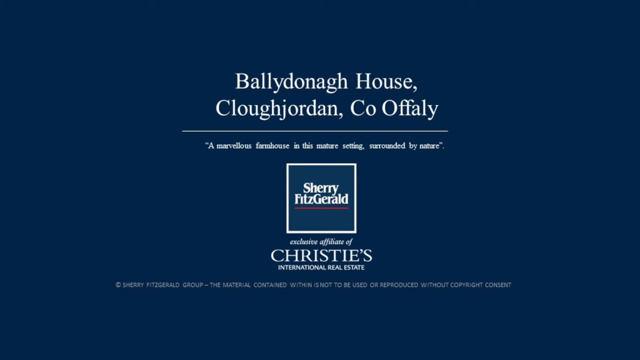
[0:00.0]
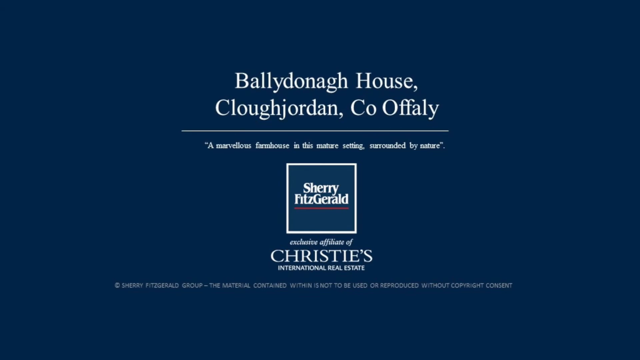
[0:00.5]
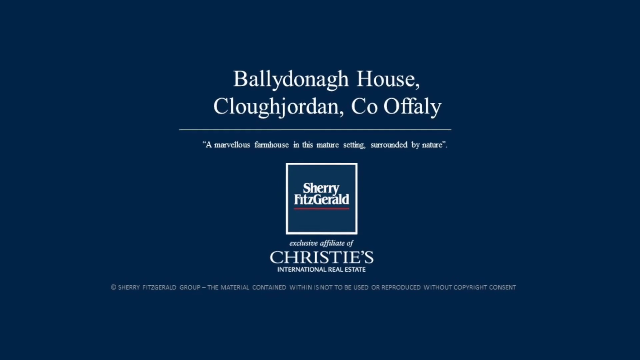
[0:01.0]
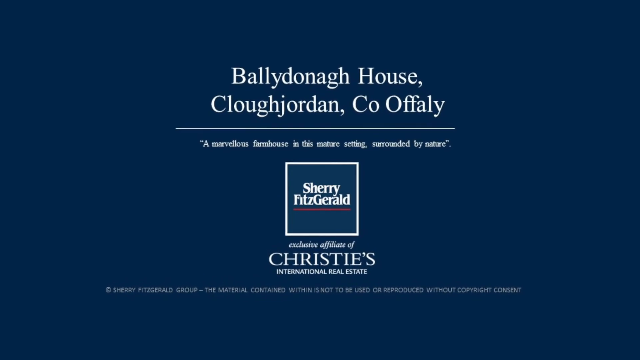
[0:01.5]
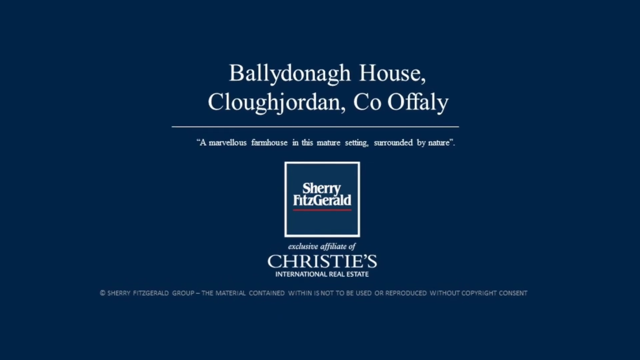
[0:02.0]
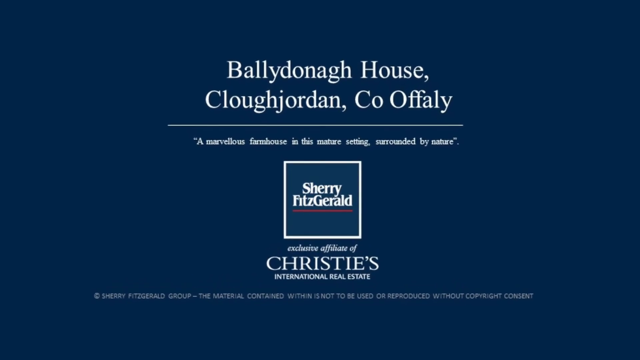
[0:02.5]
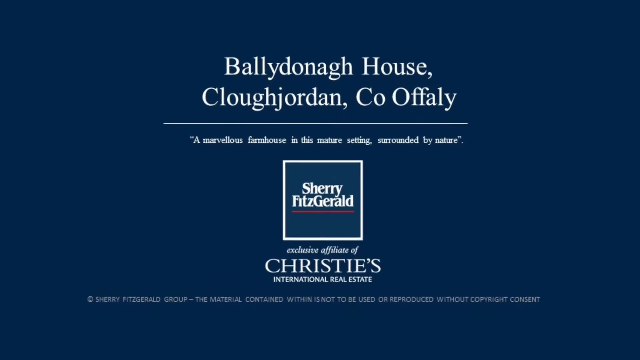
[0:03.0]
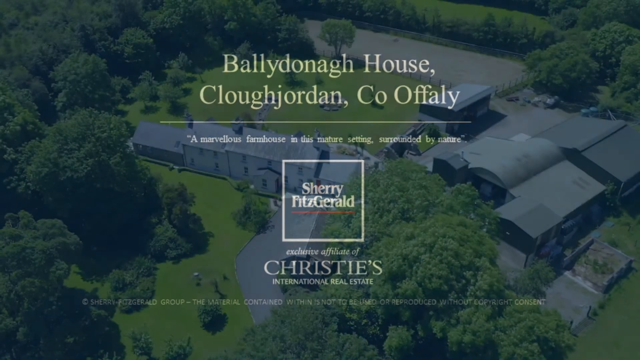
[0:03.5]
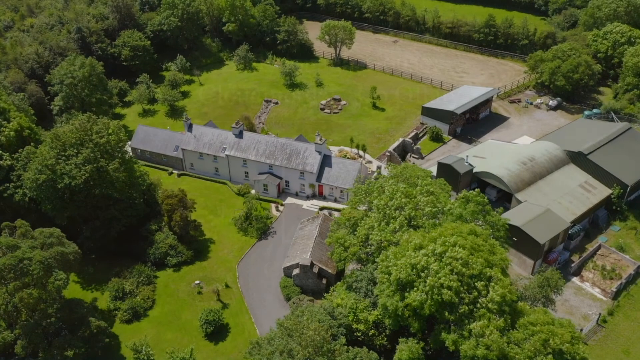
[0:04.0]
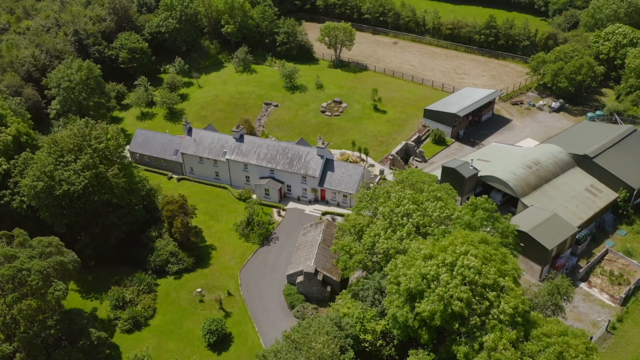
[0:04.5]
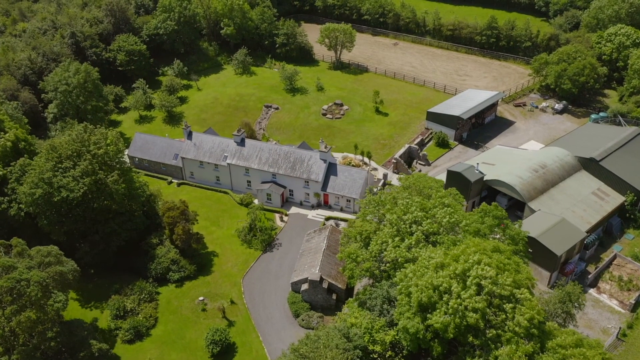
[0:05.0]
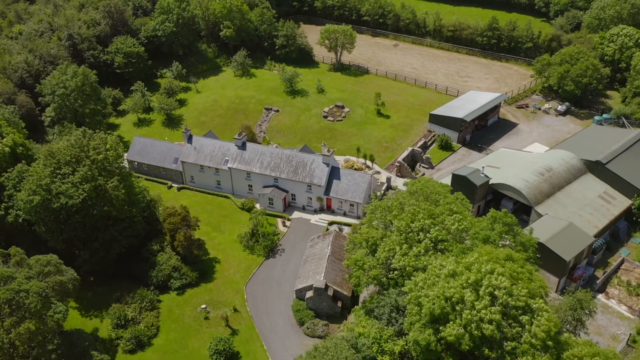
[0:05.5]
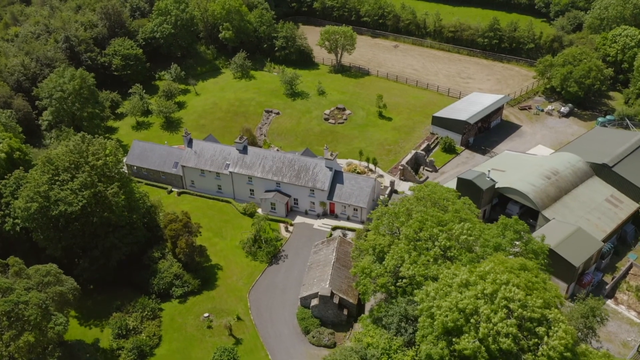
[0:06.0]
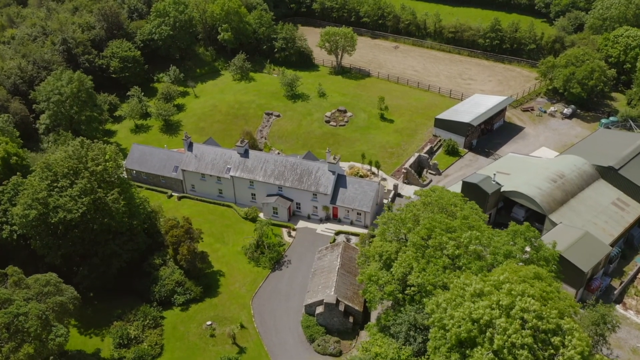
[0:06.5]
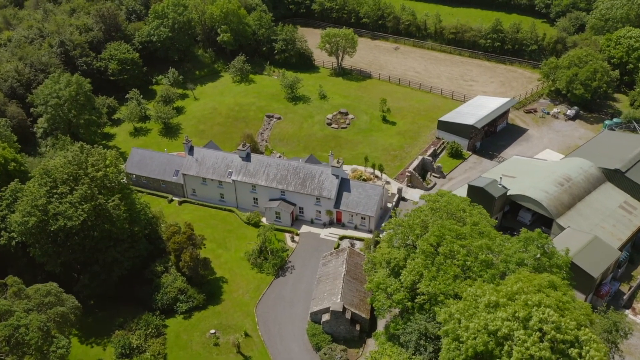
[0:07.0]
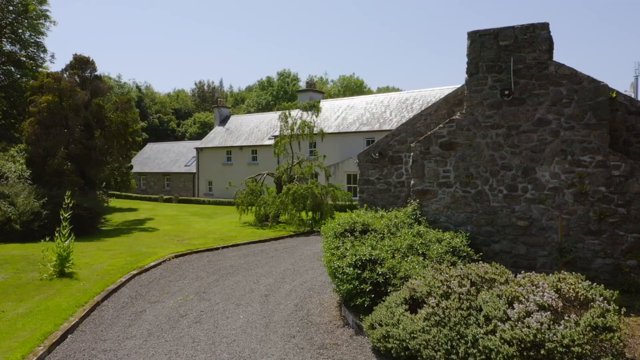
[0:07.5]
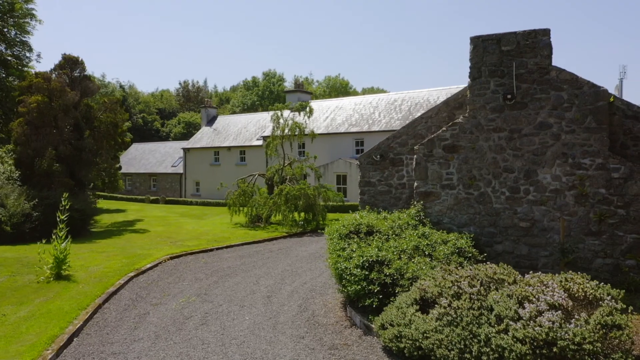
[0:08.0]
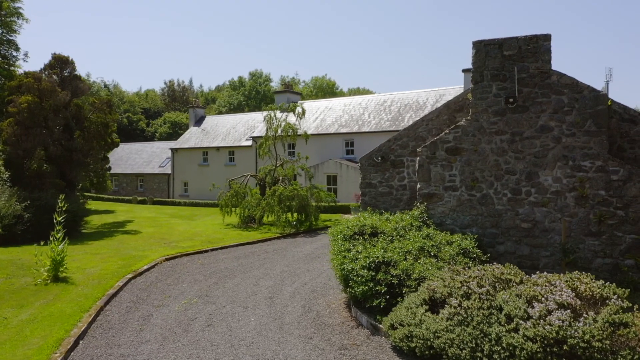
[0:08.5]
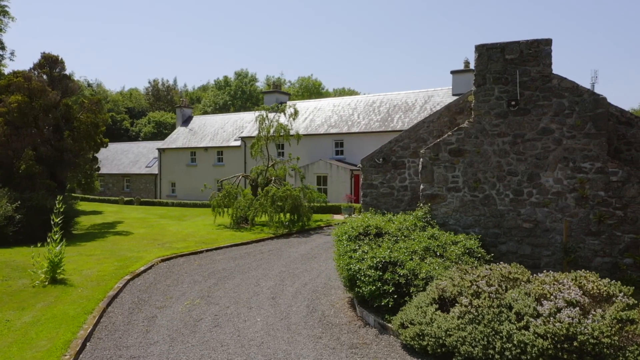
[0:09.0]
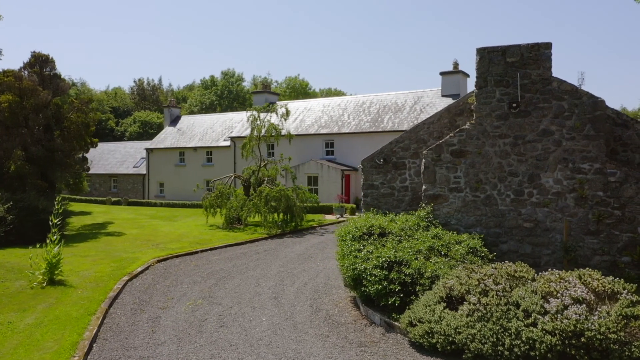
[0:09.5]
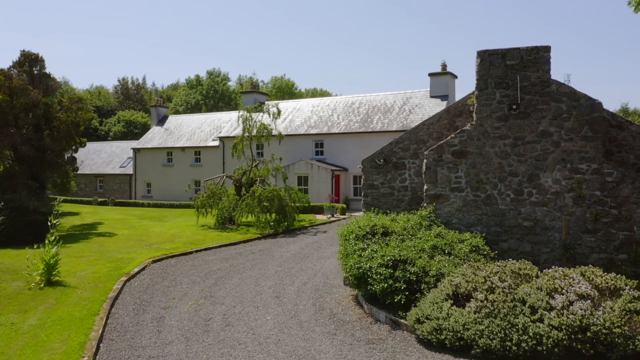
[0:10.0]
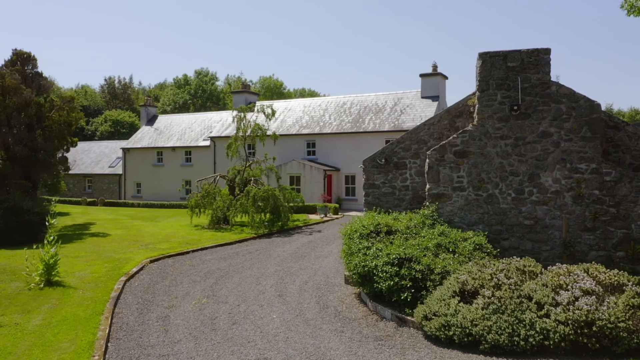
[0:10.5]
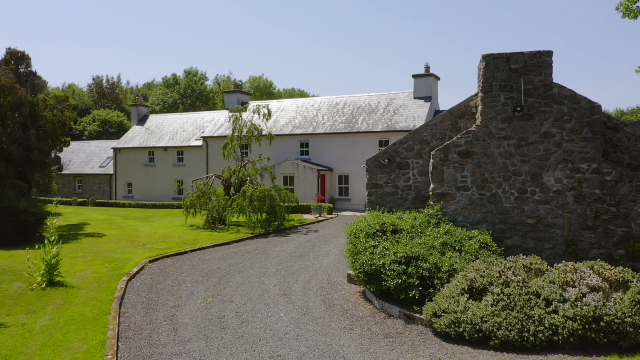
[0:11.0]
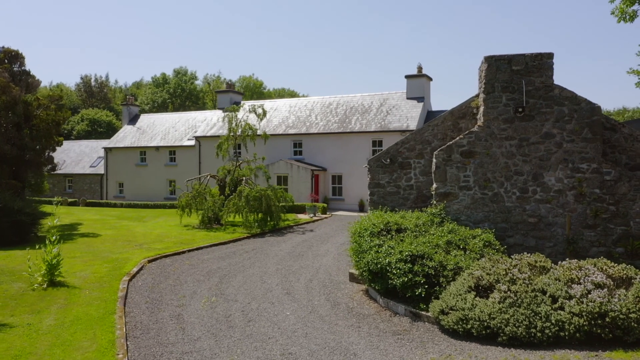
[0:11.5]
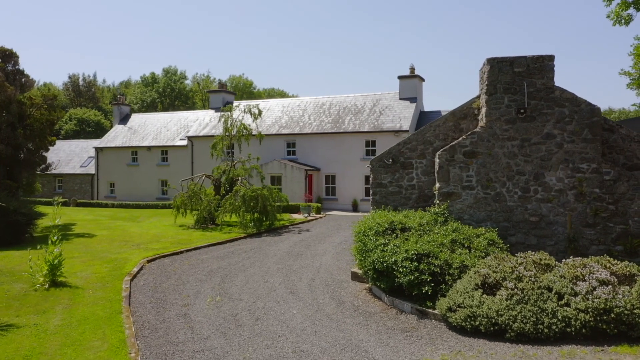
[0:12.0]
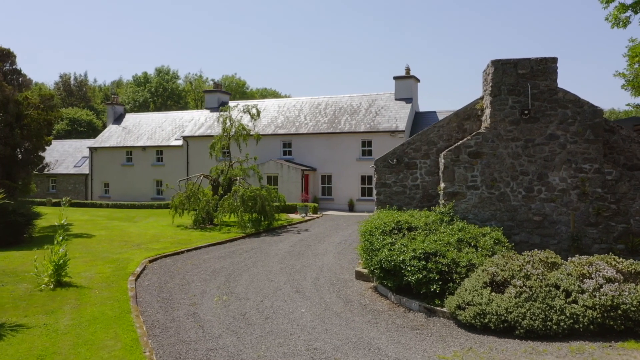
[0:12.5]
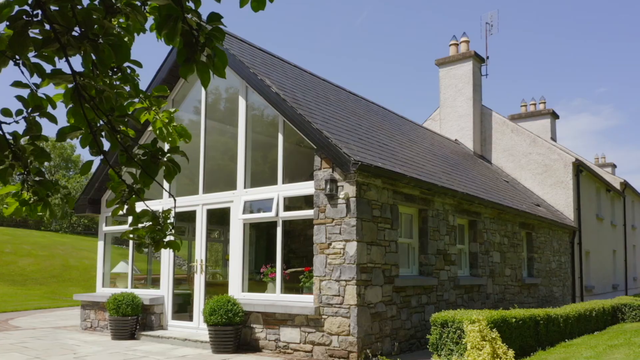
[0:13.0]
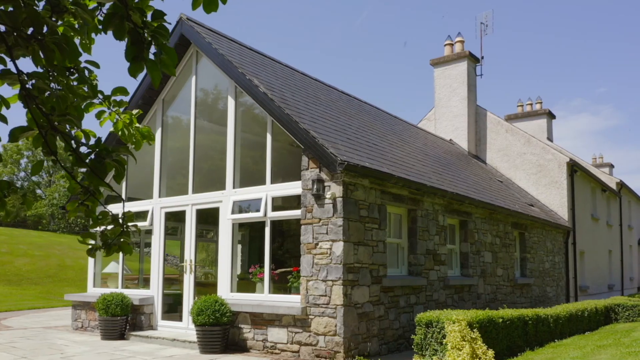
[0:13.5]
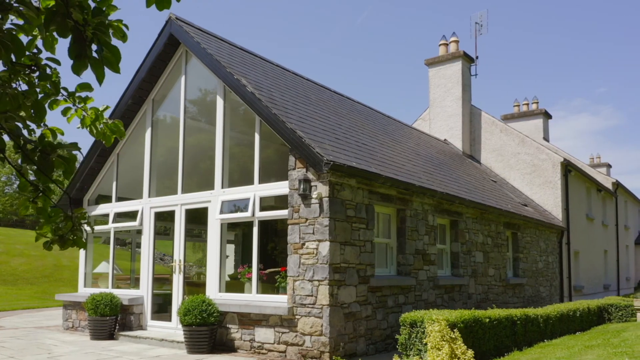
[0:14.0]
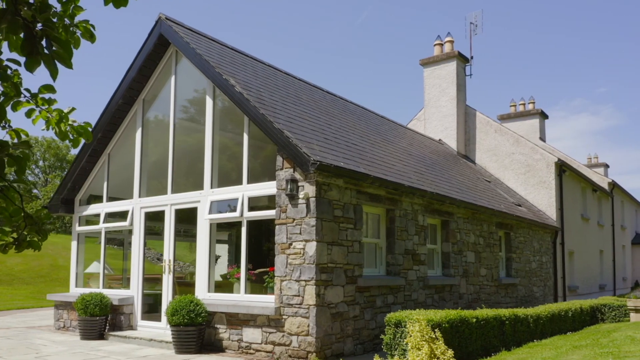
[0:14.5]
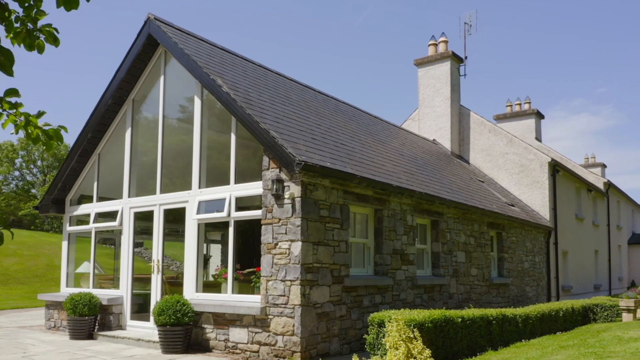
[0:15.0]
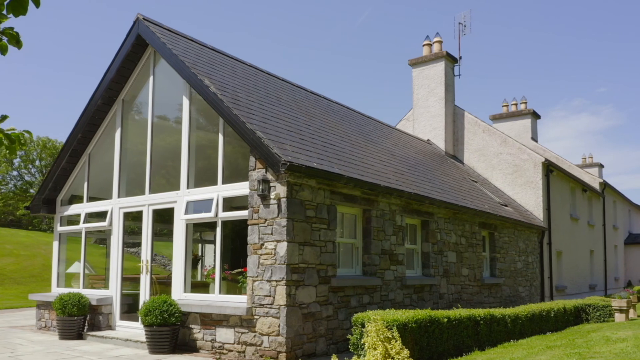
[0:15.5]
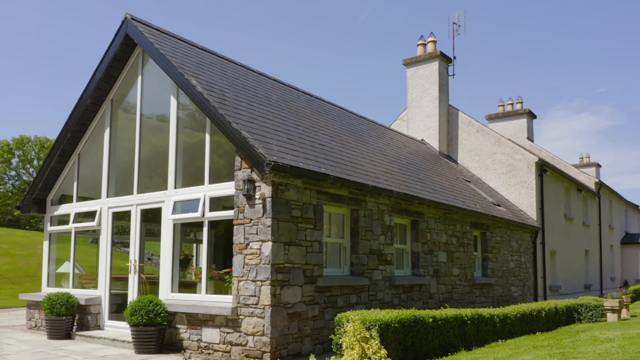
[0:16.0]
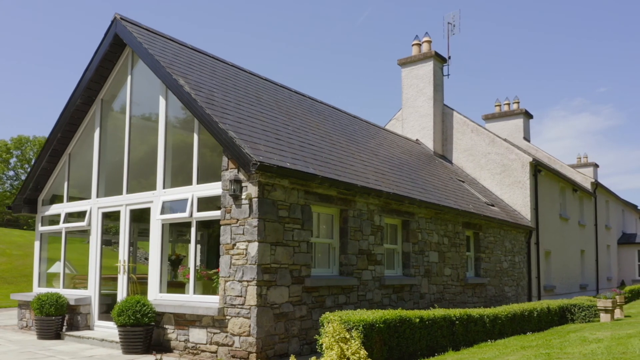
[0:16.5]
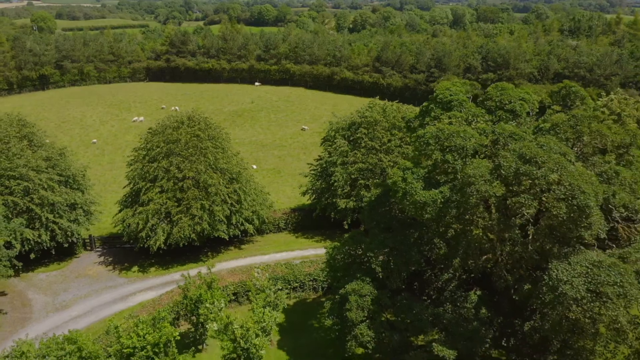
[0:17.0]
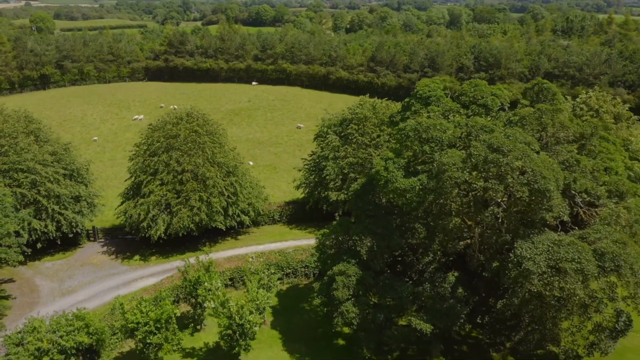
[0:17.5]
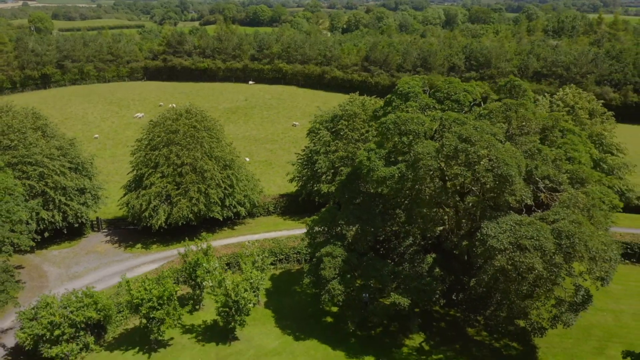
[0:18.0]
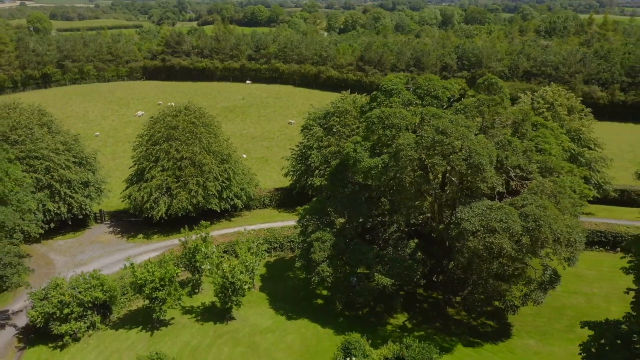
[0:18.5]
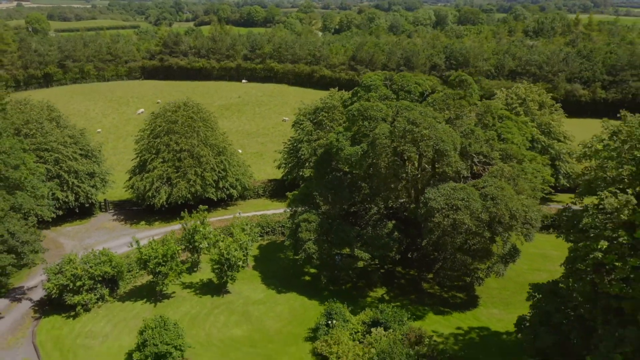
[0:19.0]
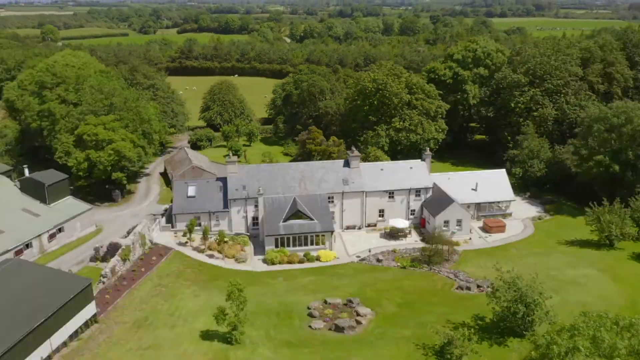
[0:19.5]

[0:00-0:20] The video is an ad for a house. It opens on a blue background with text at the top reading "Ballydonagh House at Cloughjordan C.O. Offaly," and below it a quote: "a marvelous farmhouse in this mature setting surrounded by nature." The seller appears to be Sherry Fitzgerald, and below that the text reads "an exclusive affiliate of Christie's International Real Estate." Beneath that is a small copyright notice: "Sherry Fitzgerald group the material contained within is not to be used or reproduced without copyright consent." The camera zooms in on the text, then transitions to an overhead shot of the farmhouse: a main white building with a gray roof and several chimneys on top, a big yard, something like a stable or area for horses, a tool shed, a big open area for the horses to move in, and many trees to the left and right of the buildings. A closer front shot of the building follows, showing a red door sort of off to the side, perhaps a side entrance. On the left is a greenhouse-like attached section with double glass doors, and a curved road leads around the building with a bunch of trees beside it.